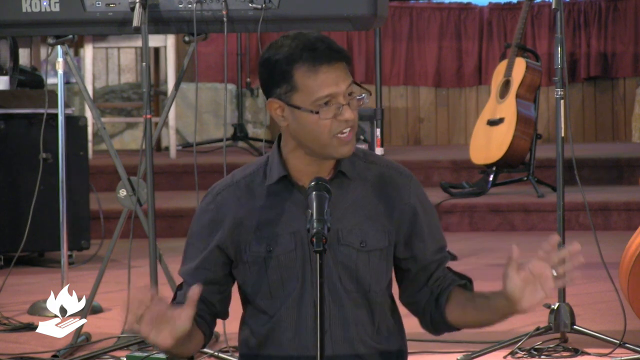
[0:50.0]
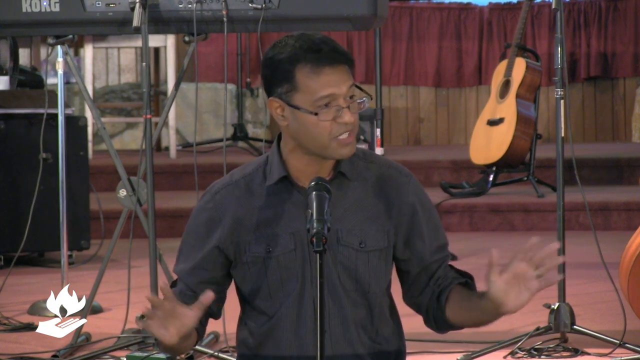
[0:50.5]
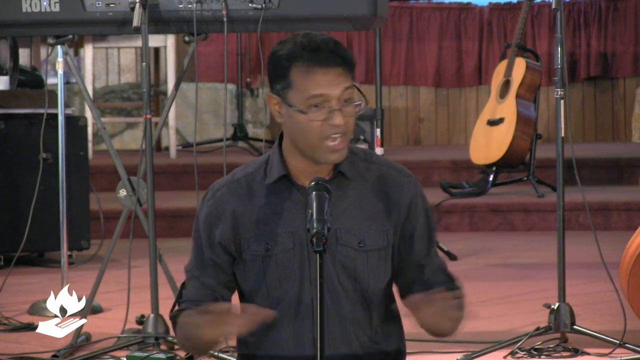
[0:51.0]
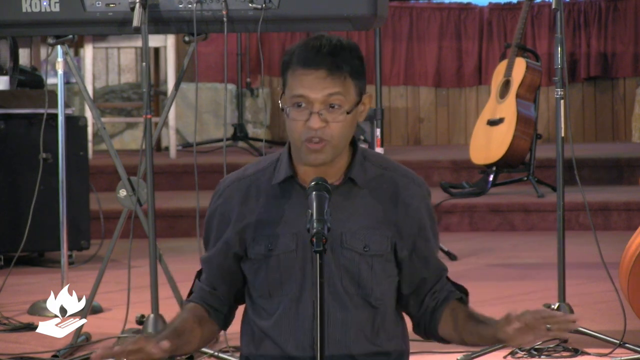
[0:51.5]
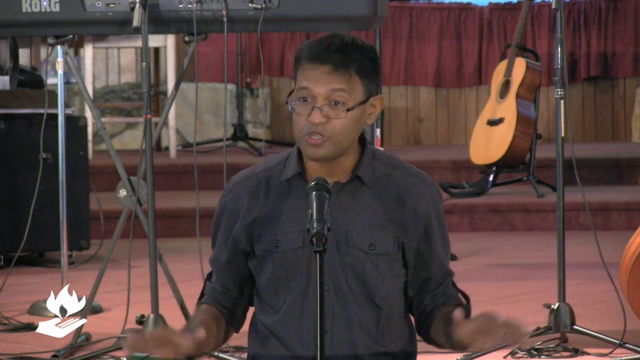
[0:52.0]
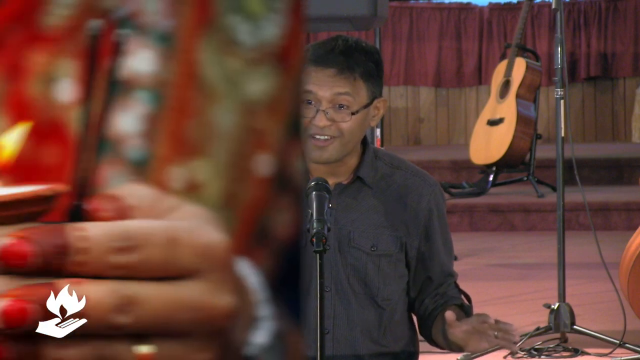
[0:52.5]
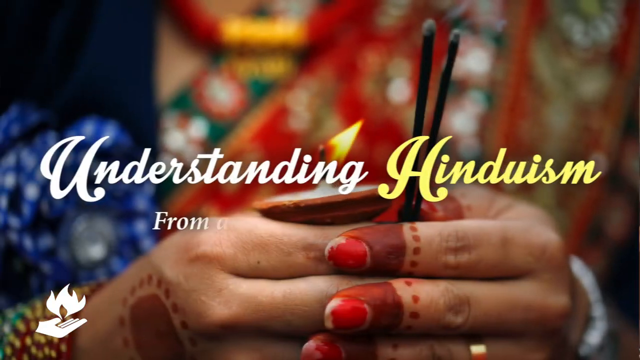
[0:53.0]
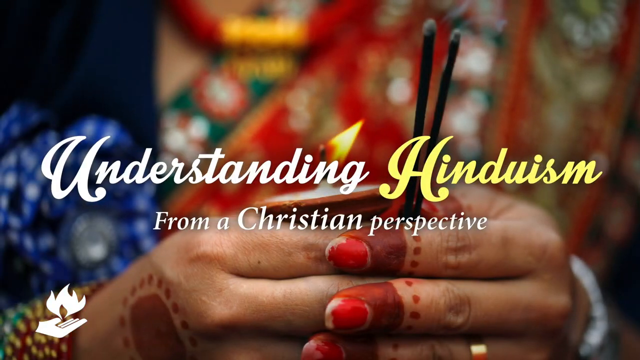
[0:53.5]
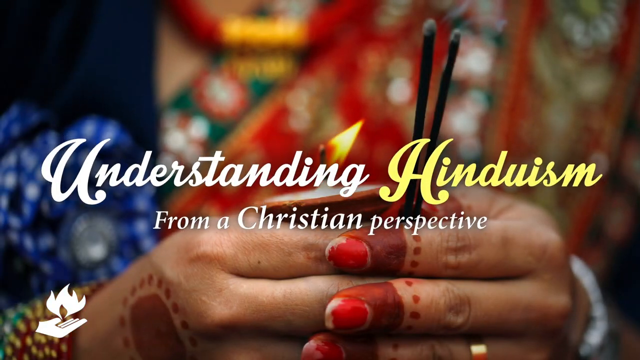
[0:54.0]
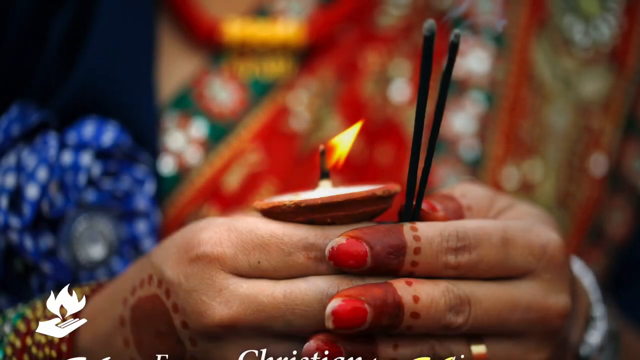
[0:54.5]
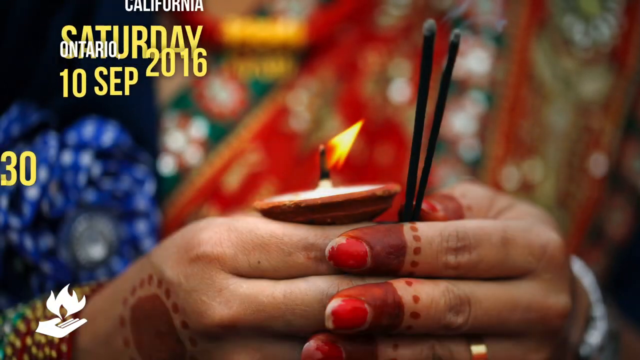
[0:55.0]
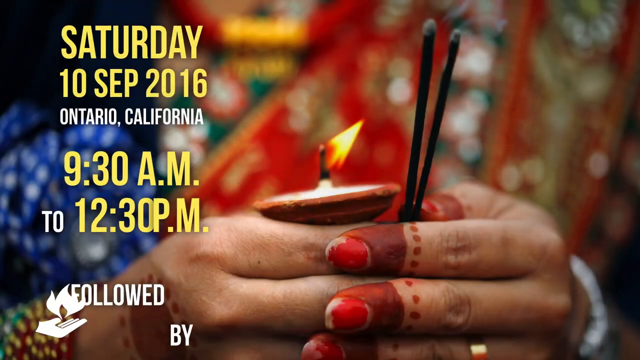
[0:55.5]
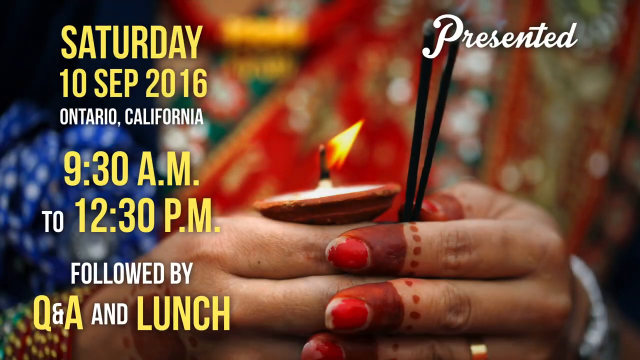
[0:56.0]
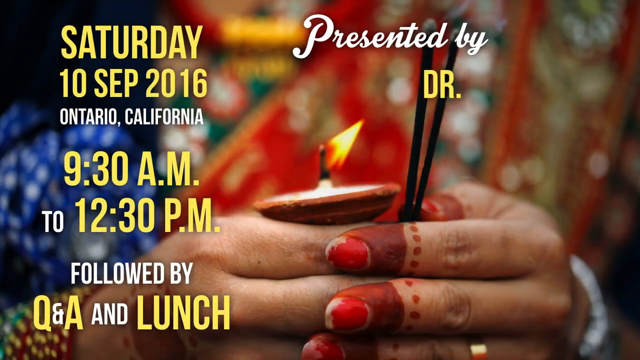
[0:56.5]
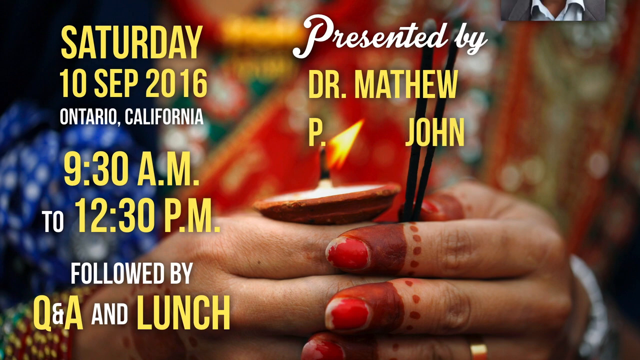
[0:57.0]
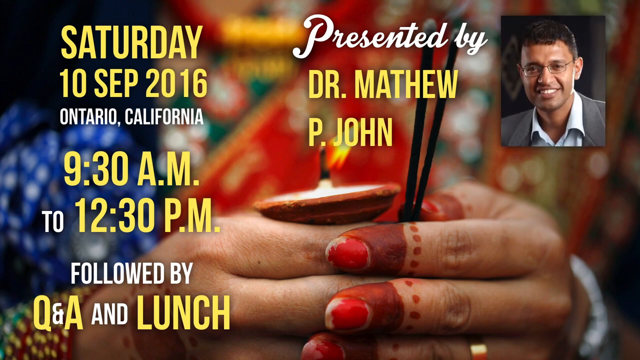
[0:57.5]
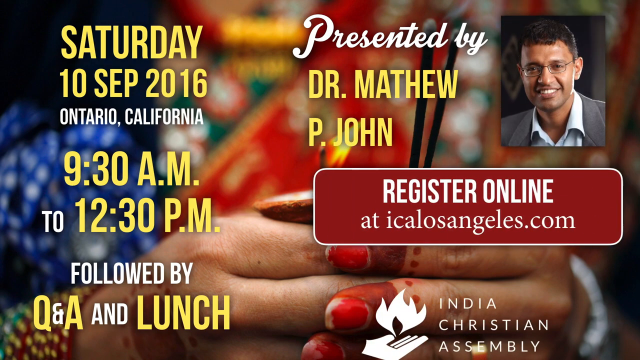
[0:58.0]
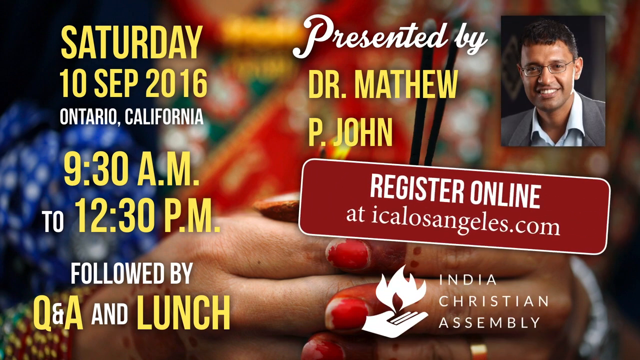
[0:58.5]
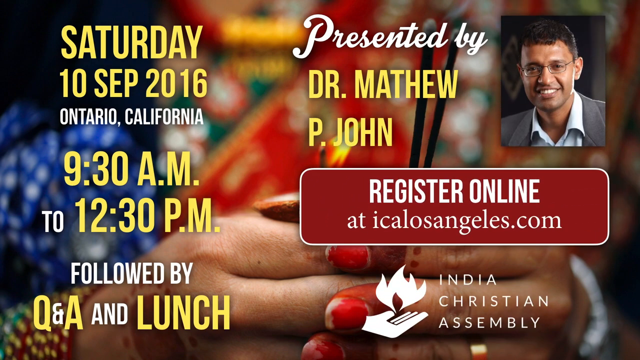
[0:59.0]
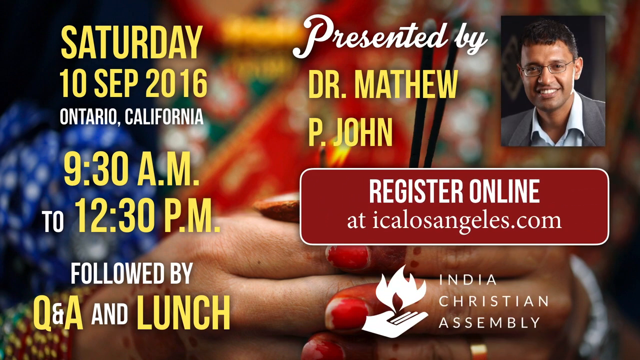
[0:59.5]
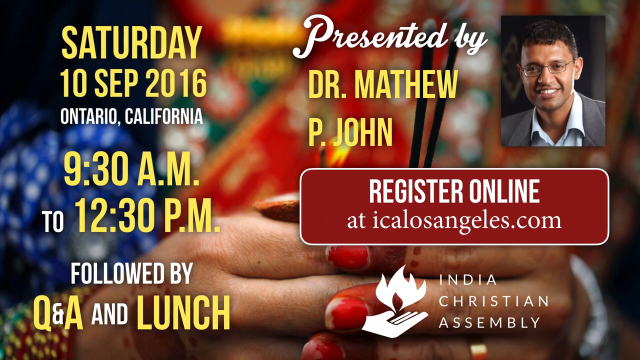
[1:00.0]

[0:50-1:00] The man in the gray button-up shirt appears to be giving closing remarks. In the bottom left corner there is a drawing of a hand that looks like it is holding fire; the drawing has no color and looks white or gray. The man keeps speaking in front of the mic with his hands out, gesturing vigorously. An outro screen then shows "understanding Hinduism", with a woman holding candles in the background; her face is not visible, only her hands, which have chipped nail polish. Under the title is "from a Christian perspective". That text slides to the bottom and new text slides in showing "Saturday, 10 September".